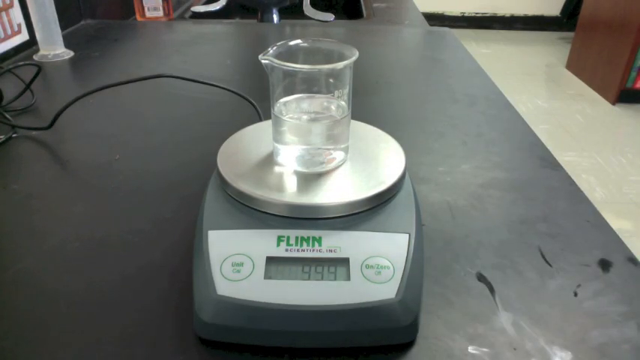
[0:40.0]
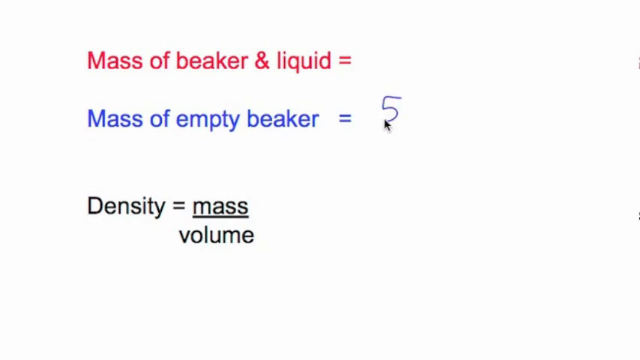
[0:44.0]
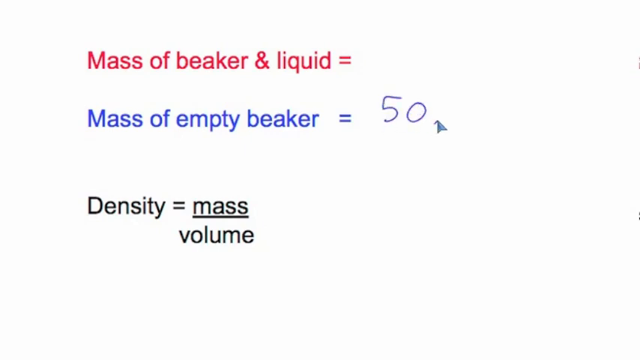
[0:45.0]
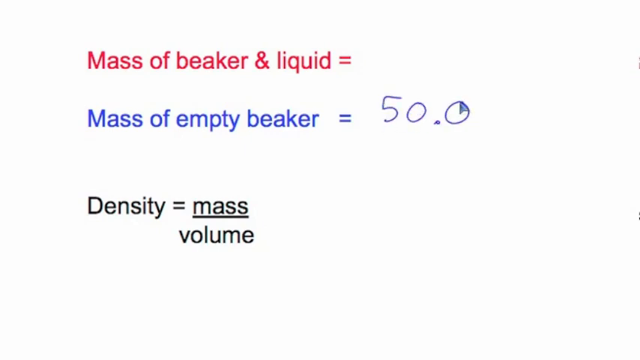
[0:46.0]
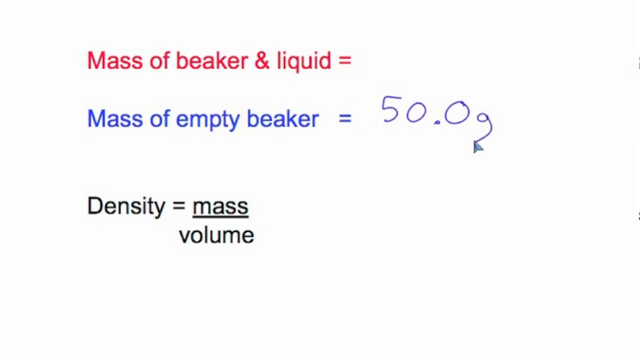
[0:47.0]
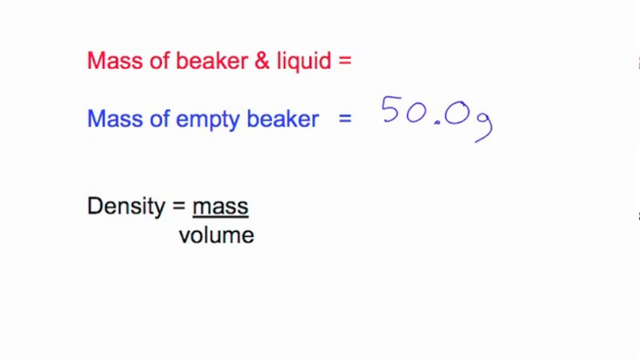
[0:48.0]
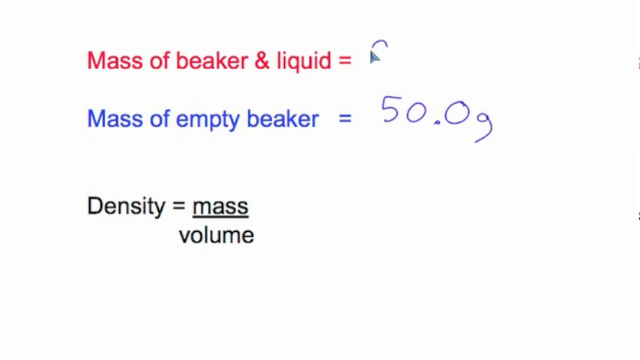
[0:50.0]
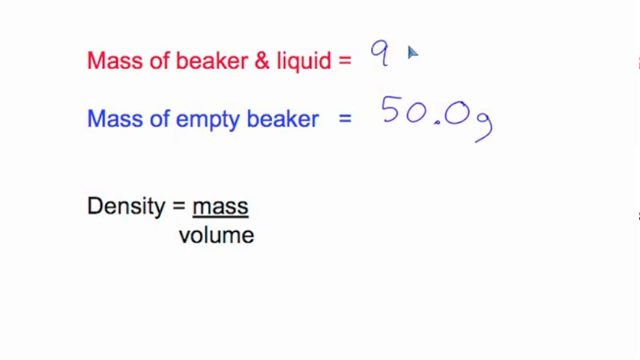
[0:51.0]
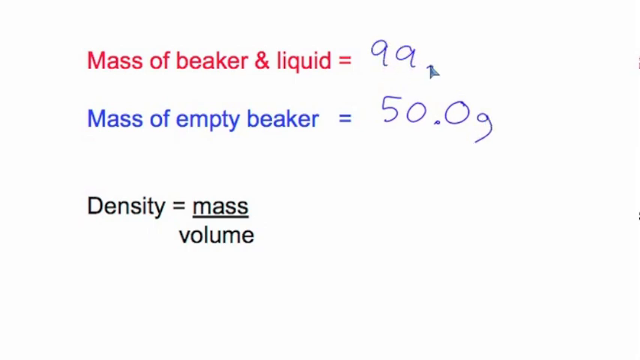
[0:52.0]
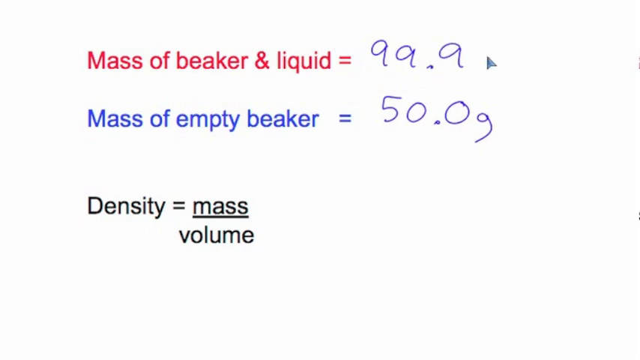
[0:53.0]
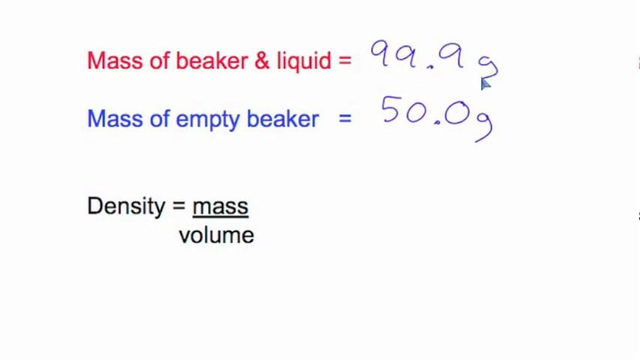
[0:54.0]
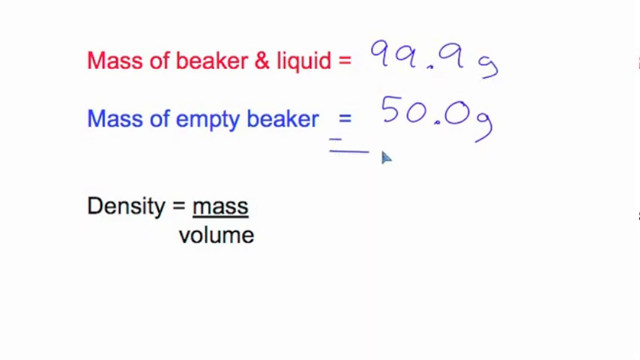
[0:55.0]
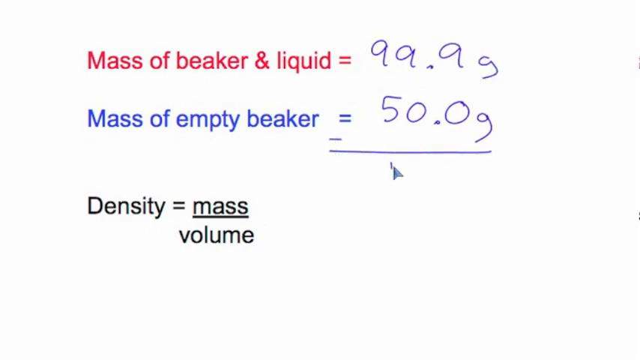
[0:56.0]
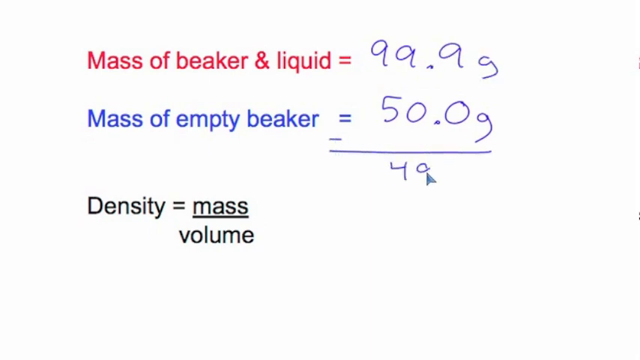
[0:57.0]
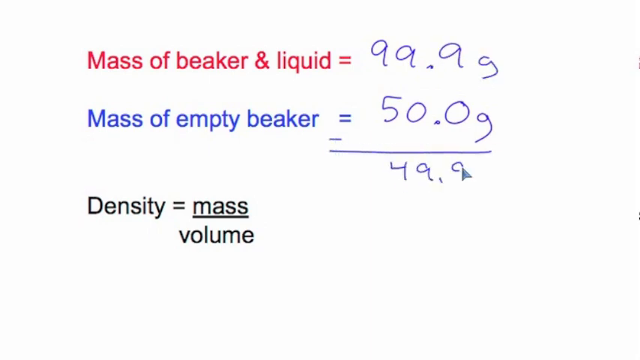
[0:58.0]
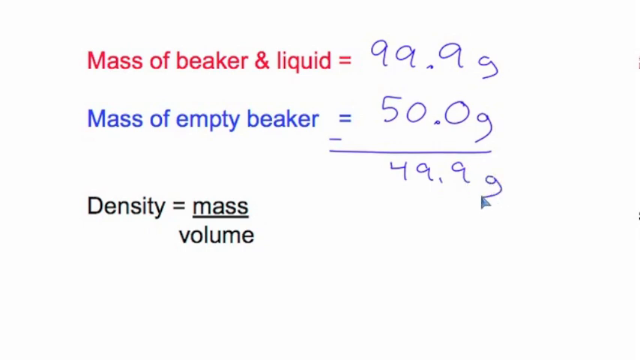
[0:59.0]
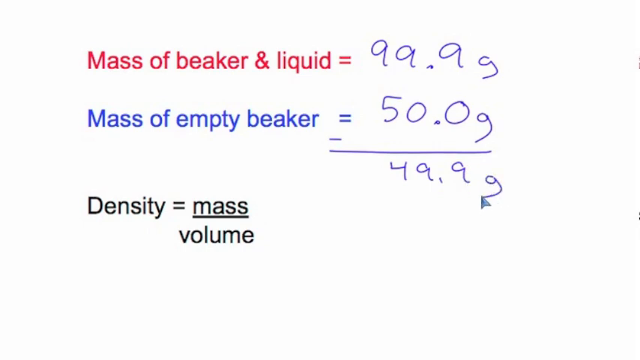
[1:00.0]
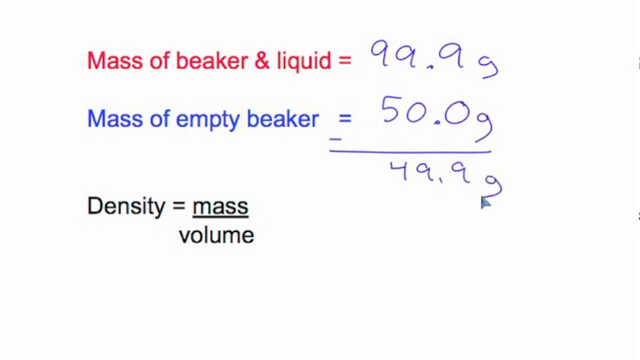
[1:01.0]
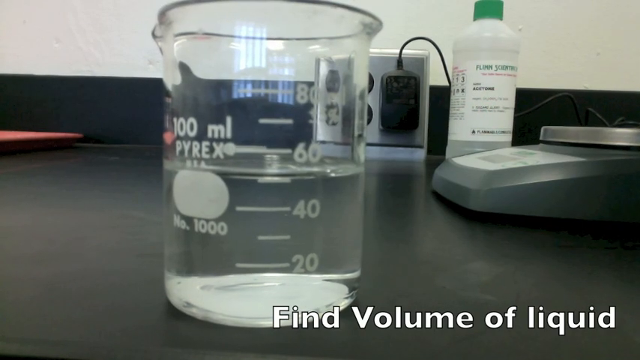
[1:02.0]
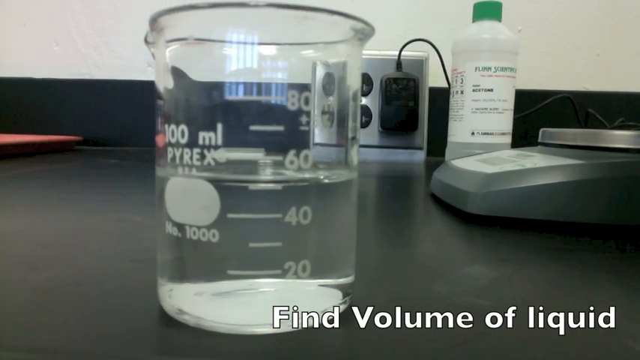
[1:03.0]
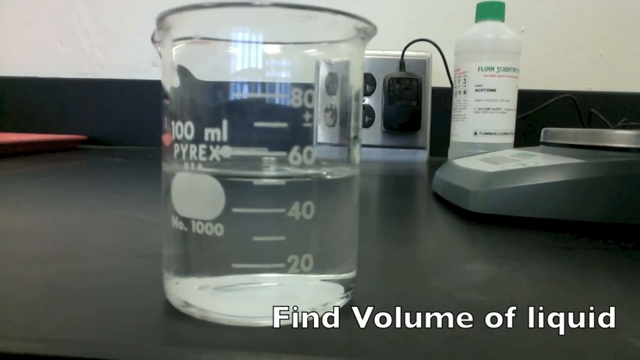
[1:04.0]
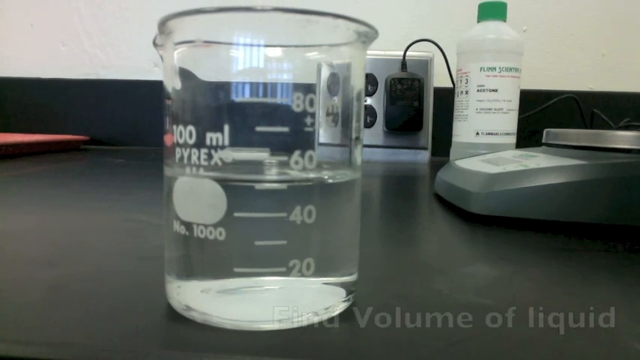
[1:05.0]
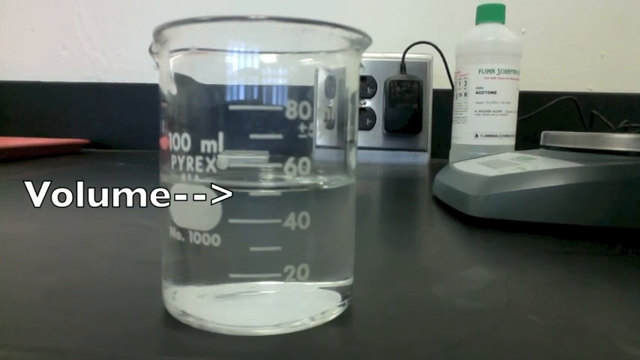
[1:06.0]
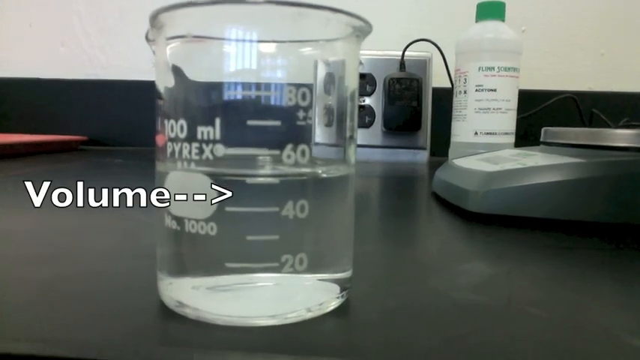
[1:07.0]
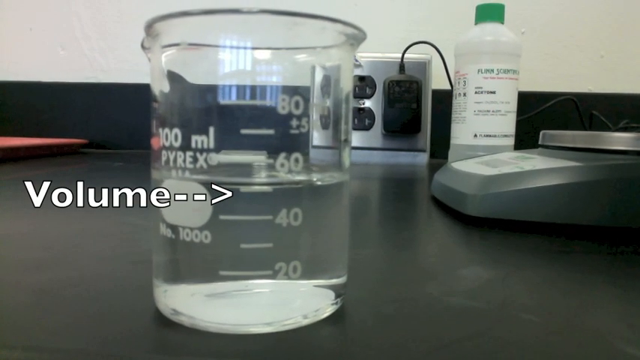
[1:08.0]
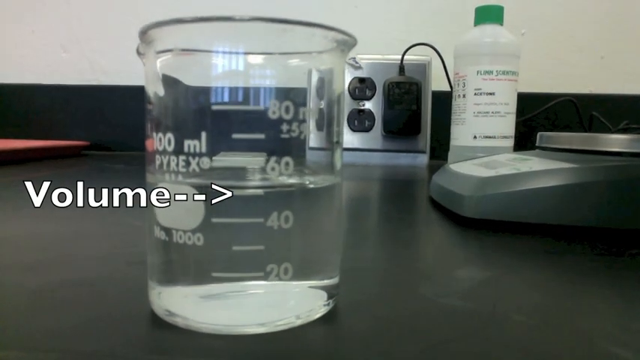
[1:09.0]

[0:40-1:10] The scale is black with a white front and a round silver plate for weighing. A black cord comes out of the back of it and runs toward the left side of the screen. A white beaker is in the top left corner. On the scale is a clear beaker with a spout for pouring facing left, and the scale reads 9.99. The view switches to a white screen with "mass of beaker and liquid equals" in red letters, below it "mass of empty beaker equals 50" in blue letters, and below that "density equals mass volume" in black letters. A small arrow writes "50.0 G" next to mass of empty beaker and "9.99 G" next to mass of beaker and liquid. It then draws a line under them and a minus mark, and writes "49.9 G". The view switches back to the beaker with the text "find volume of the empty beaker", and the word "volume" appears with an arrow pointing to where the water is in the beaker.